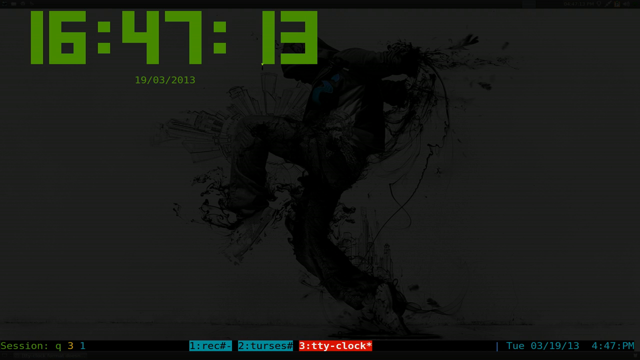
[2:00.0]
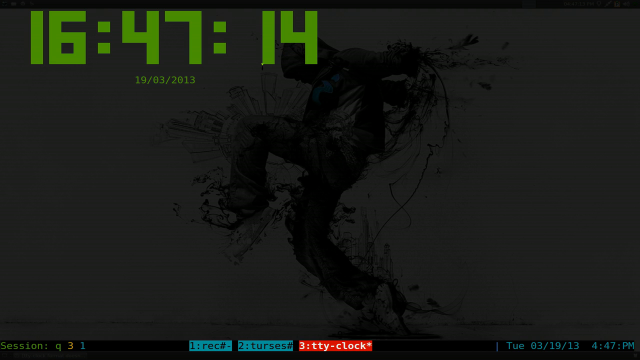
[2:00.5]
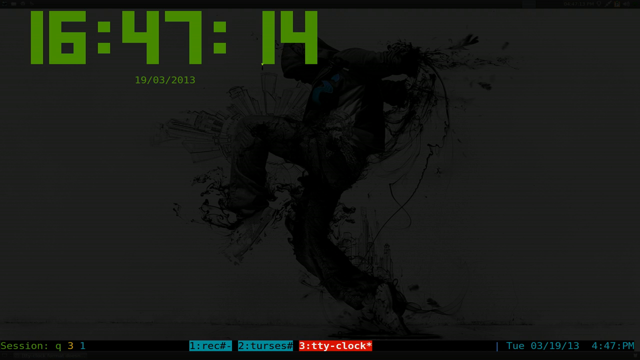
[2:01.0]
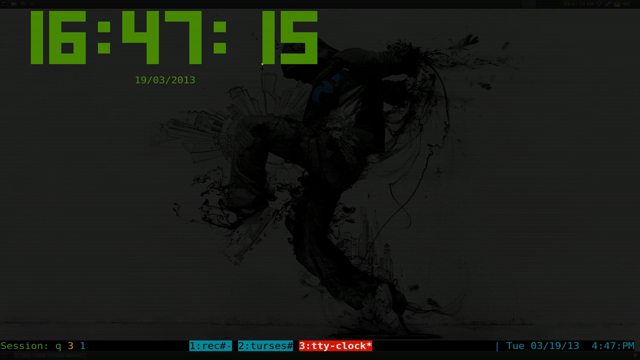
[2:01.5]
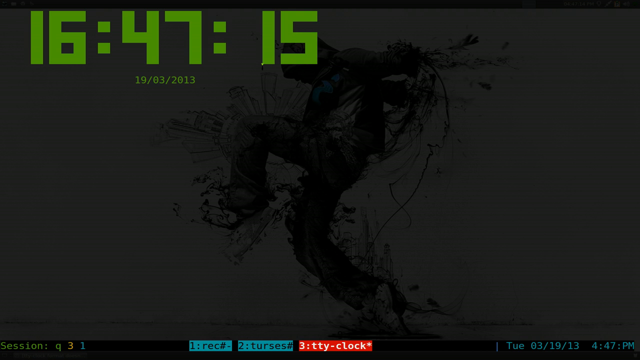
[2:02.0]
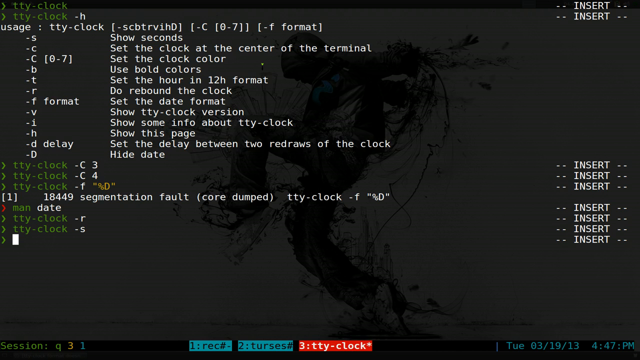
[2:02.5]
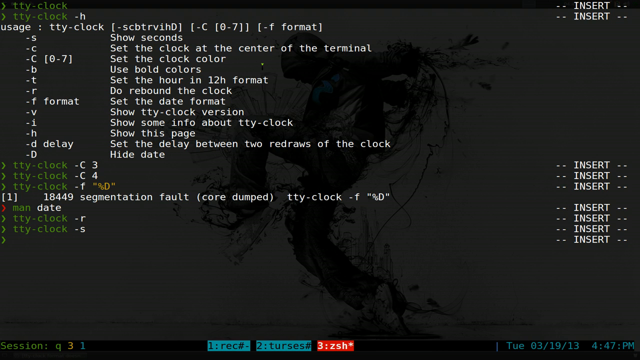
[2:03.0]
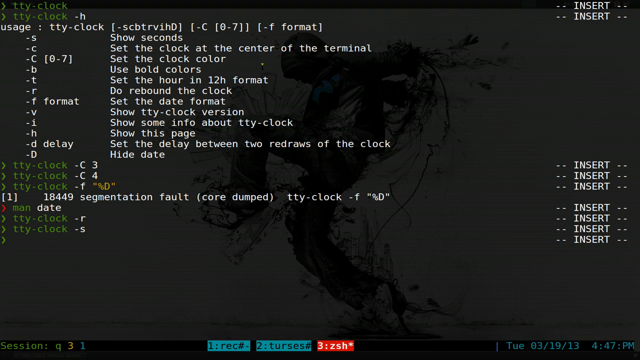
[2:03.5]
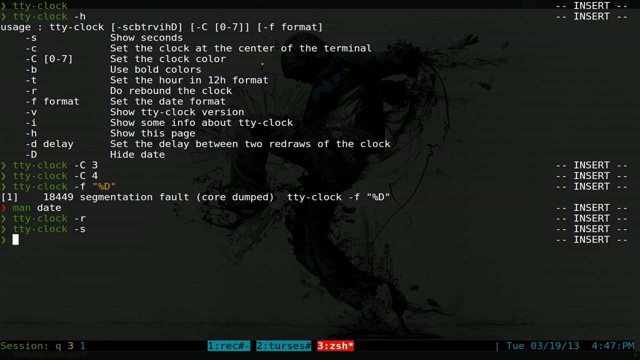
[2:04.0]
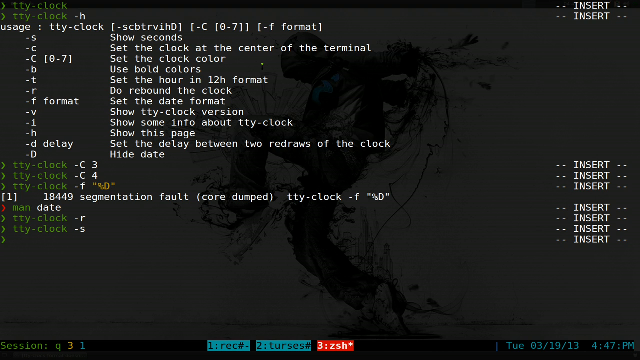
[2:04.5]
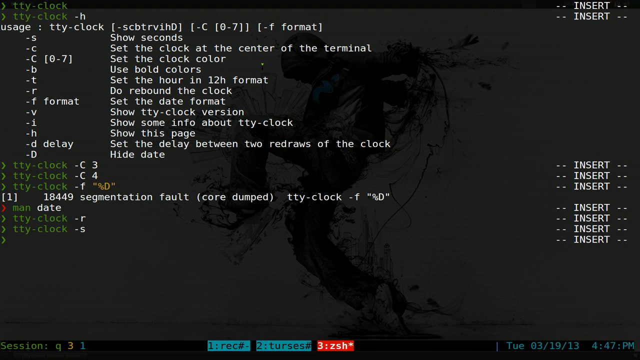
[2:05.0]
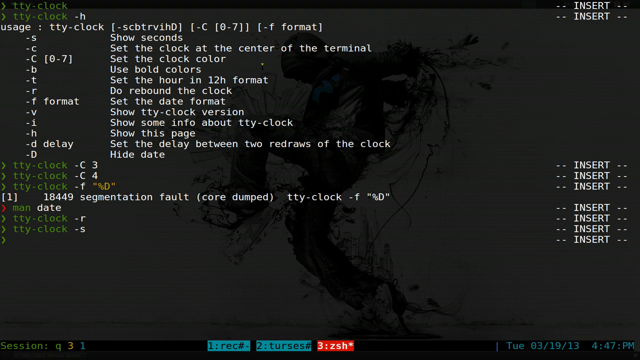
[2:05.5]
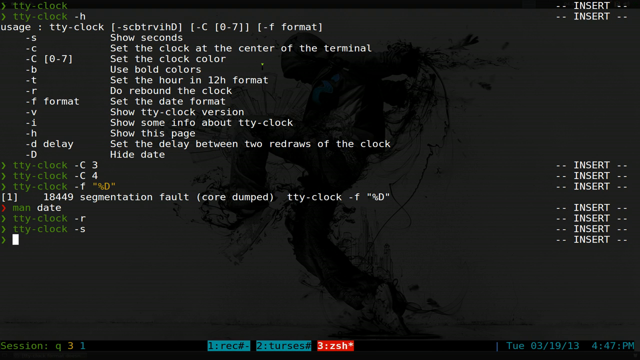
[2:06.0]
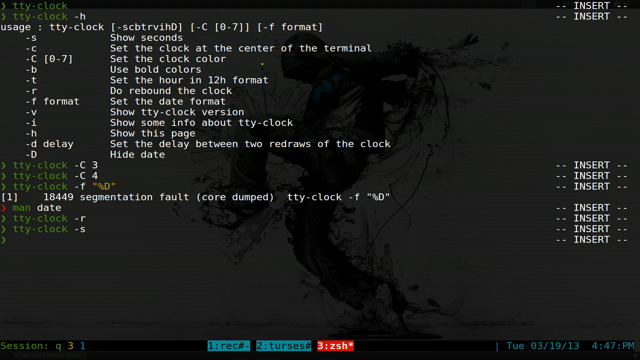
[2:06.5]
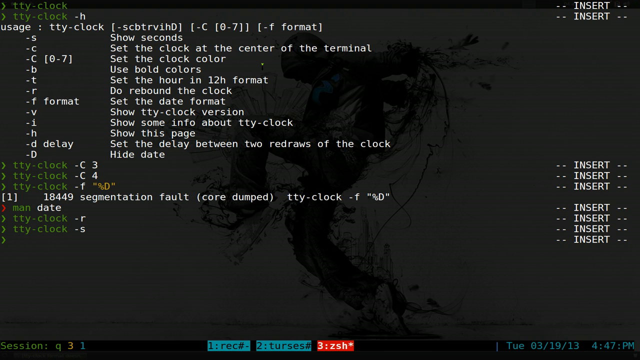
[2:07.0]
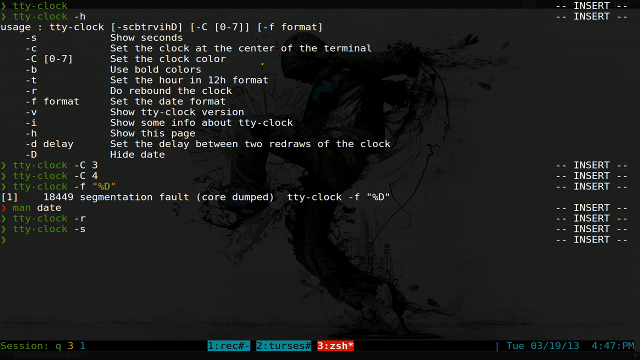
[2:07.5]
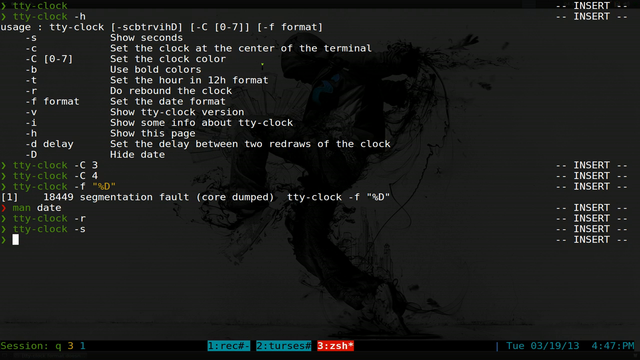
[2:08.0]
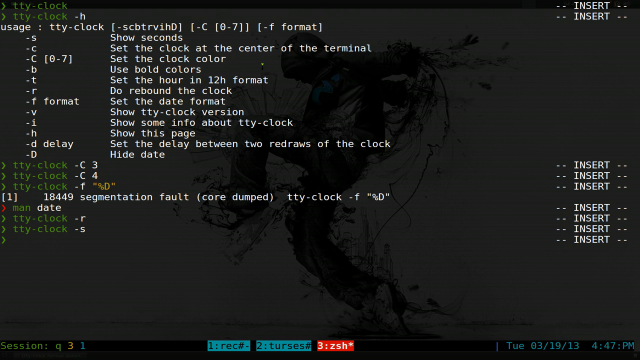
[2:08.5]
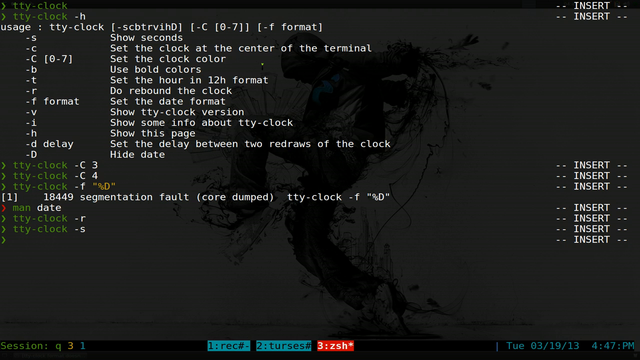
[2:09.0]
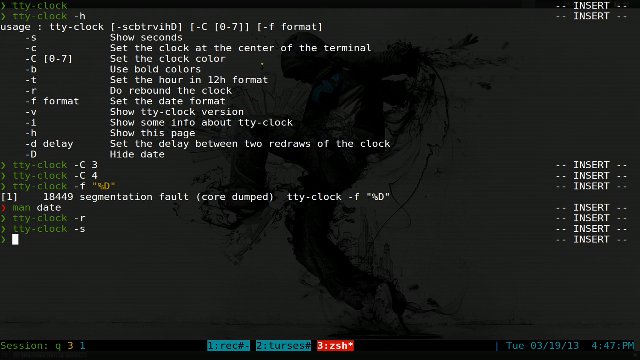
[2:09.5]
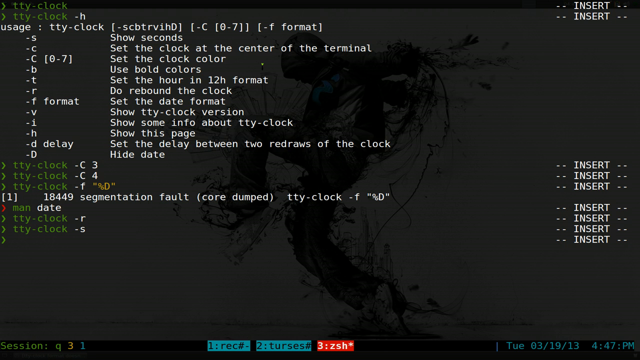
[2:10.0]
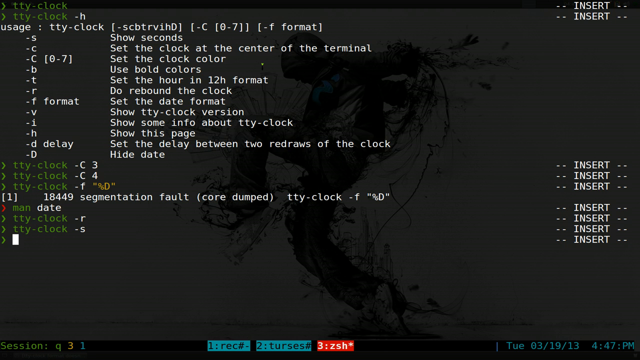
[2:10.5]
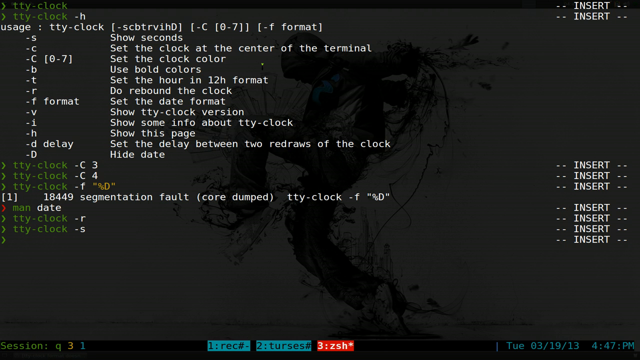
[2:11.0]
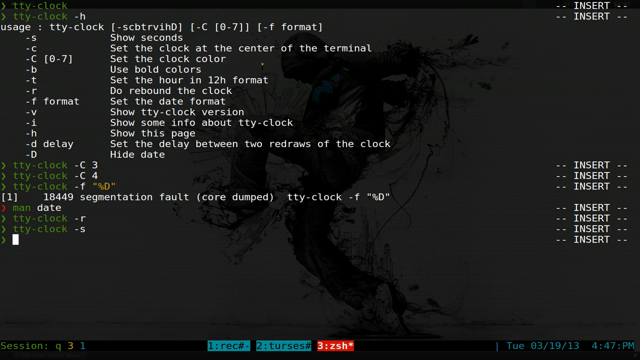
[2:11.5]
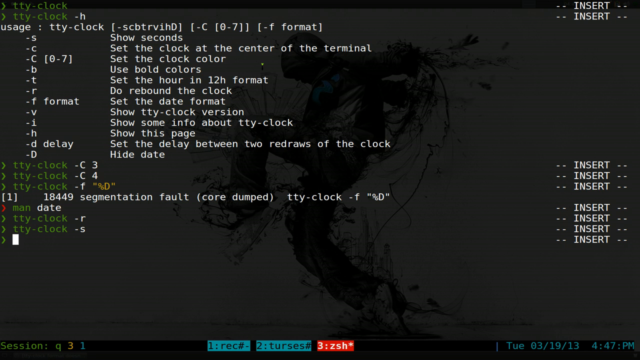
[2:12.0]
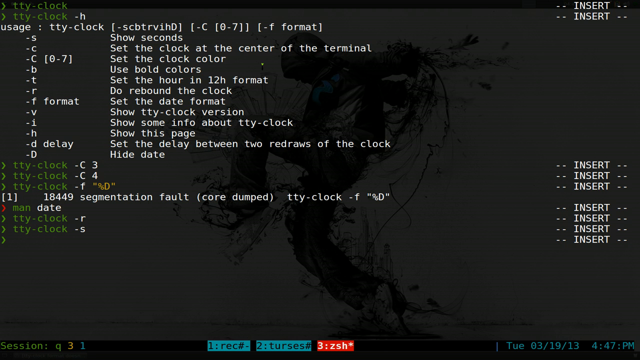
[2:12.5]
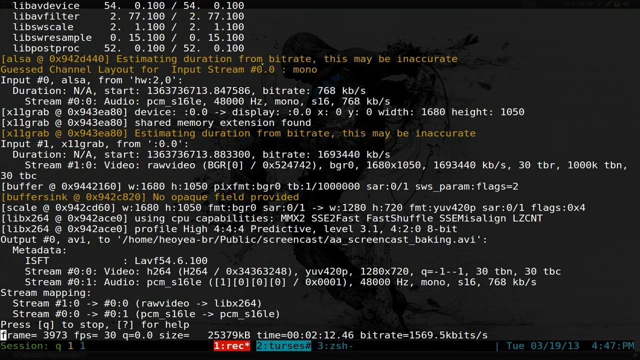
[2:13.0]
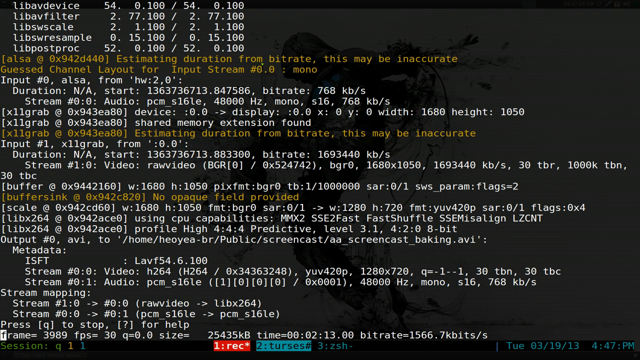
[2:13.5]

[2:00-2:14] A screen that looks like the black command screen of a computer operating system displays the date and time. The time appears first in large colored text reading "16:47:14", in hours, minutes and seconds separated by colons. Below it, the date is written in day-month-year format as "19-03-2013". The screen then changes to a black screen with about 12 different options for using the tty.clock command, and below the options the user has typed about 5 to 6 different command options.